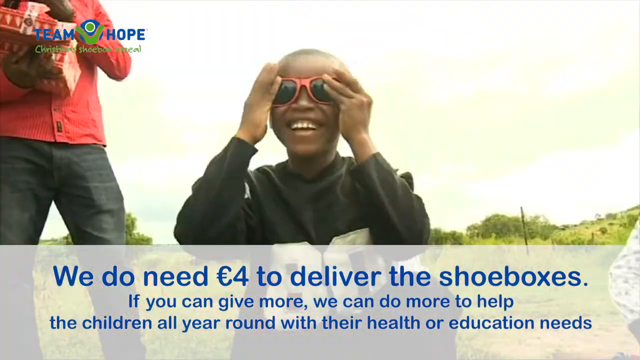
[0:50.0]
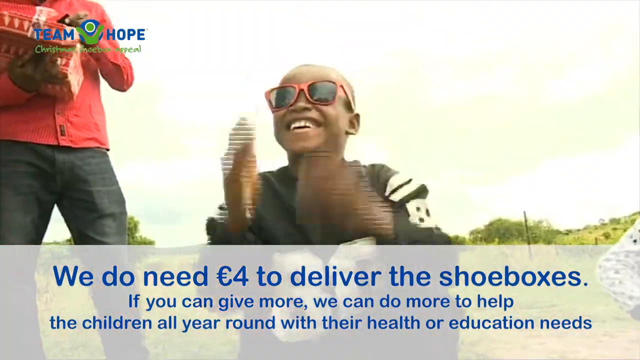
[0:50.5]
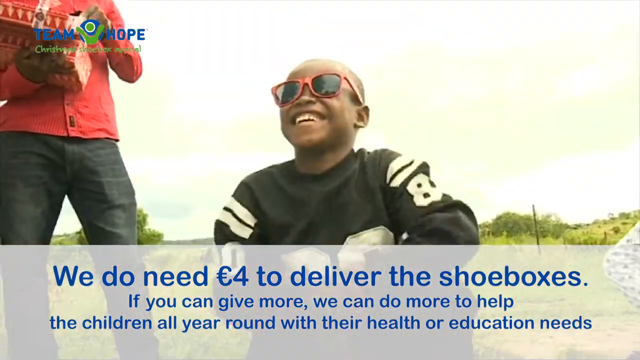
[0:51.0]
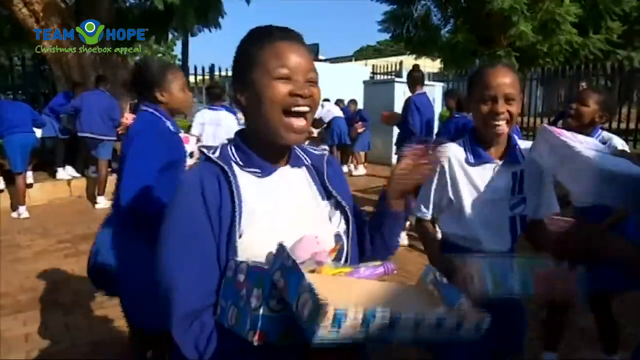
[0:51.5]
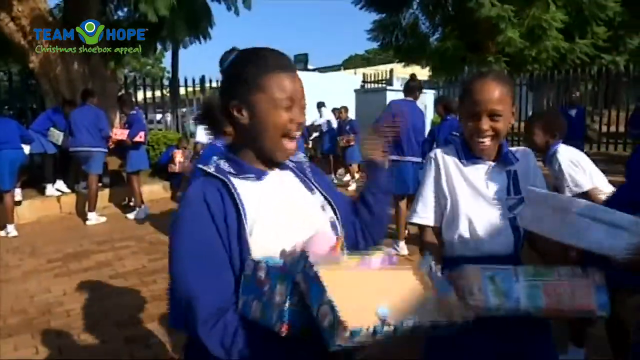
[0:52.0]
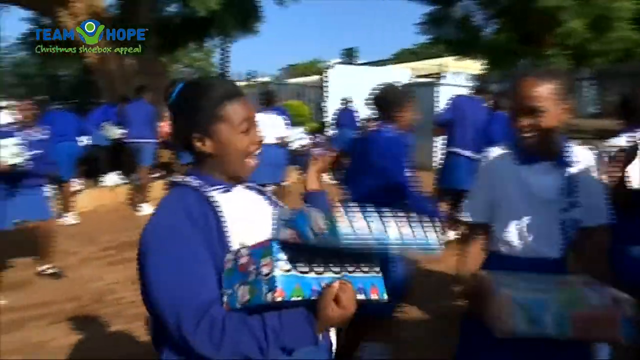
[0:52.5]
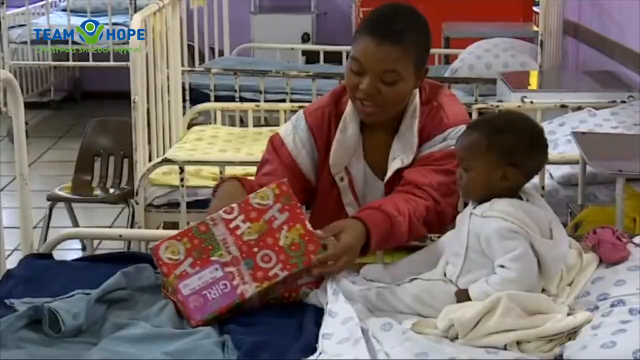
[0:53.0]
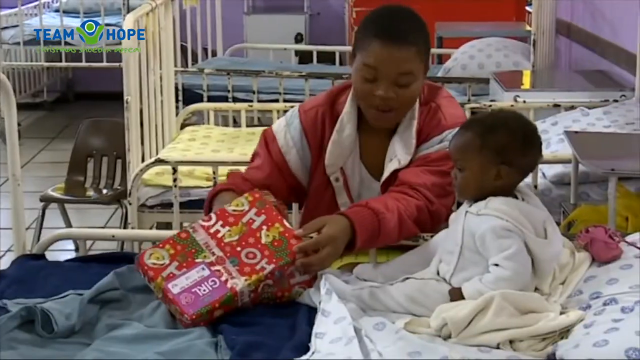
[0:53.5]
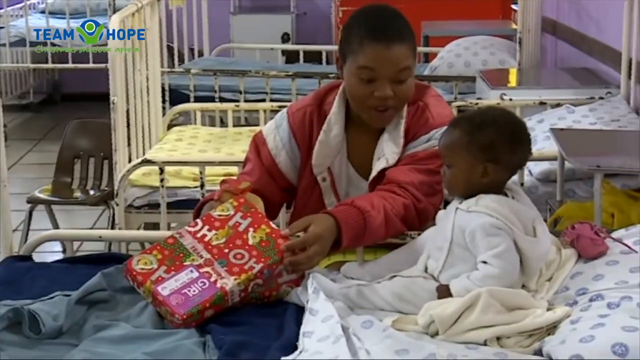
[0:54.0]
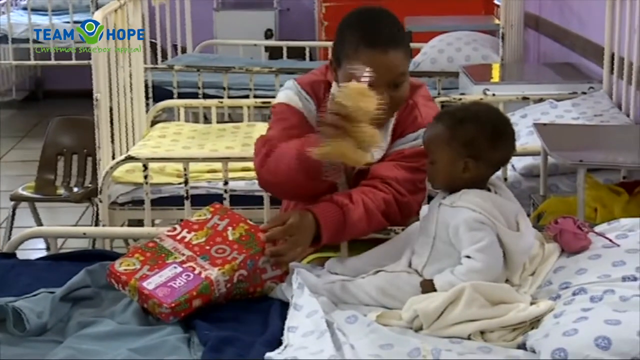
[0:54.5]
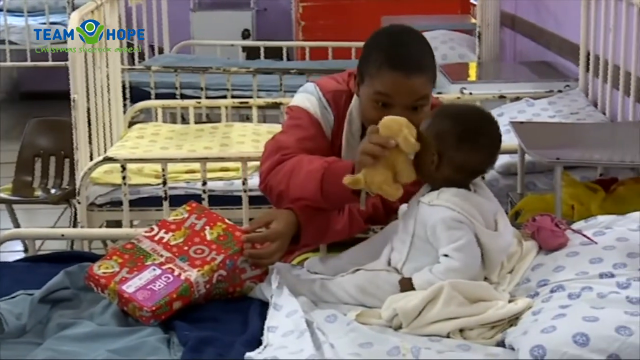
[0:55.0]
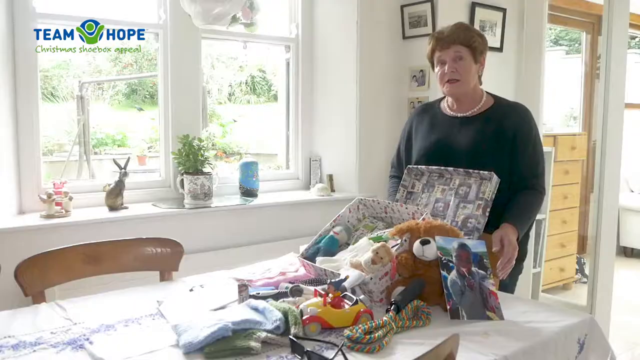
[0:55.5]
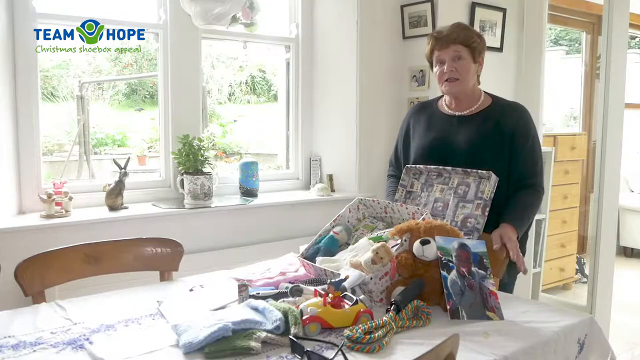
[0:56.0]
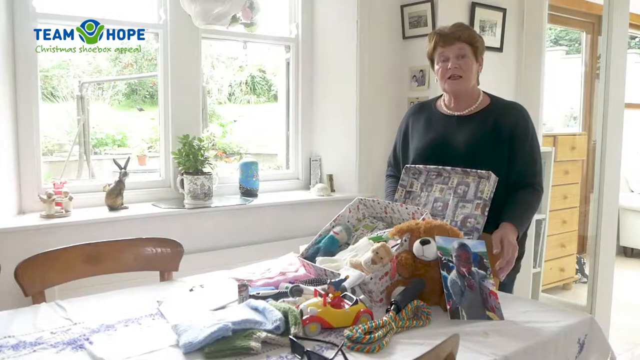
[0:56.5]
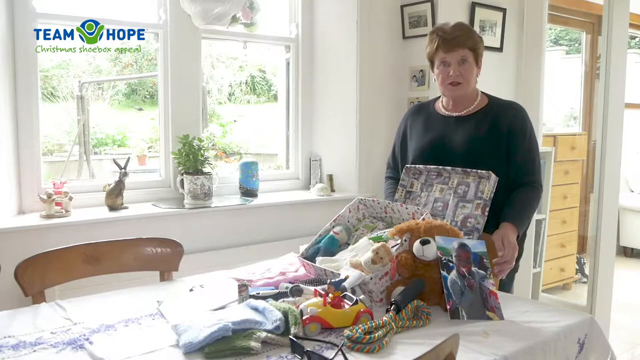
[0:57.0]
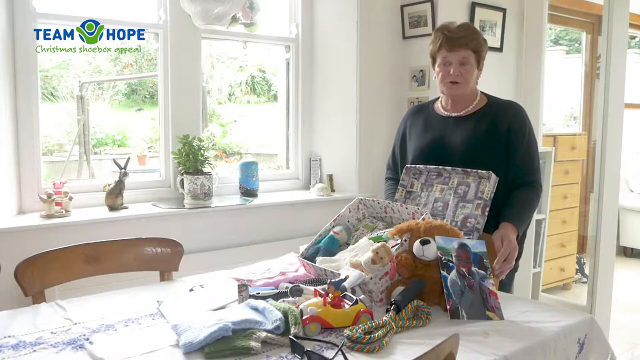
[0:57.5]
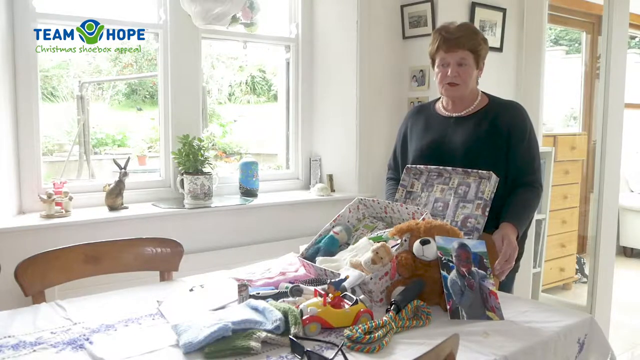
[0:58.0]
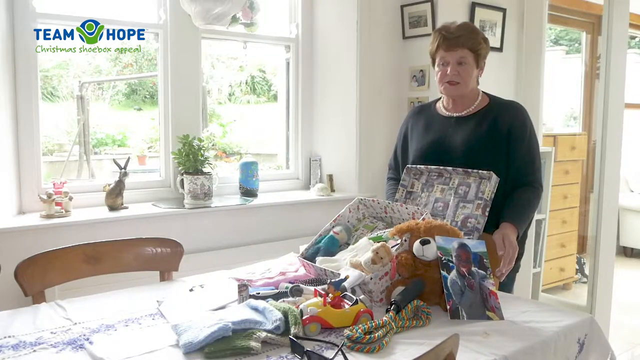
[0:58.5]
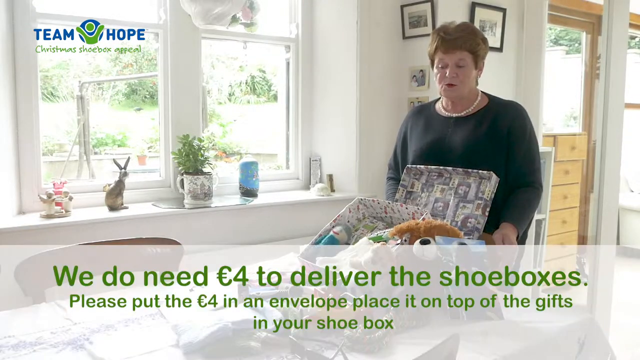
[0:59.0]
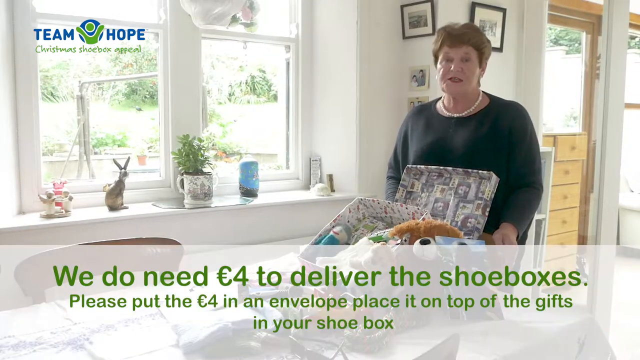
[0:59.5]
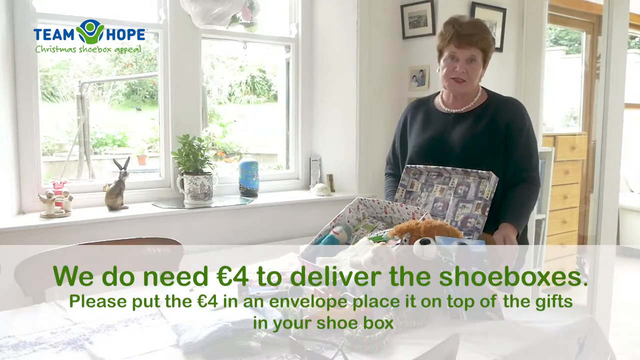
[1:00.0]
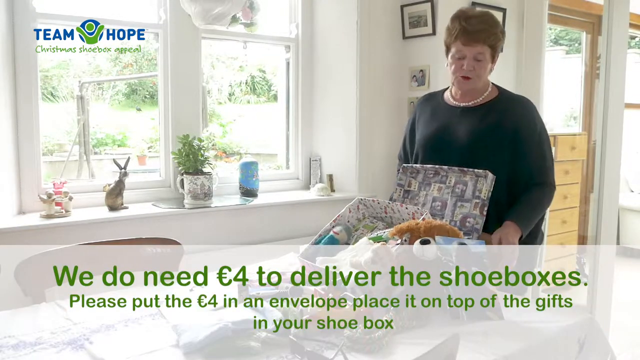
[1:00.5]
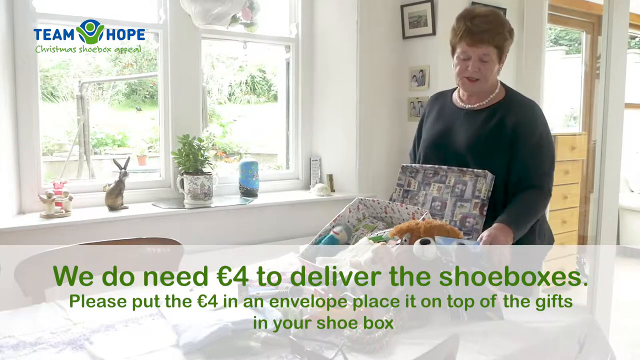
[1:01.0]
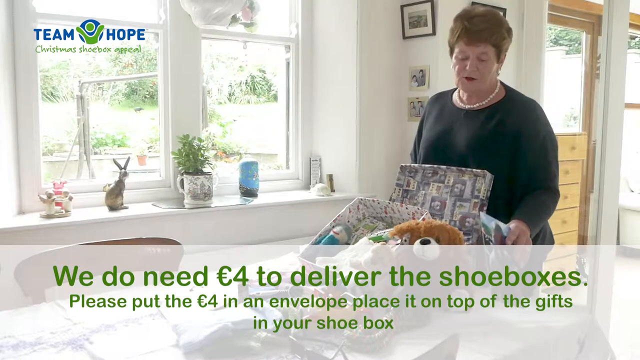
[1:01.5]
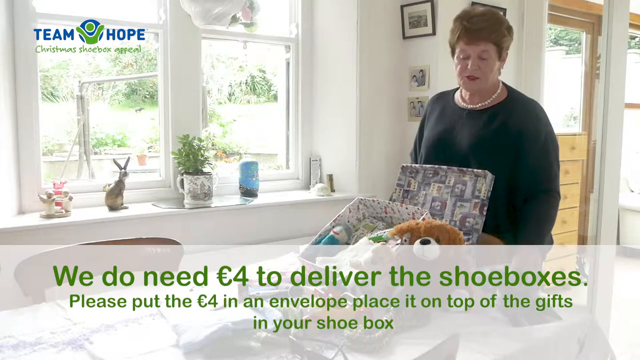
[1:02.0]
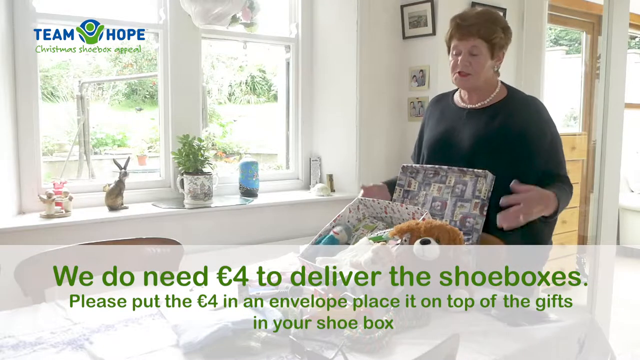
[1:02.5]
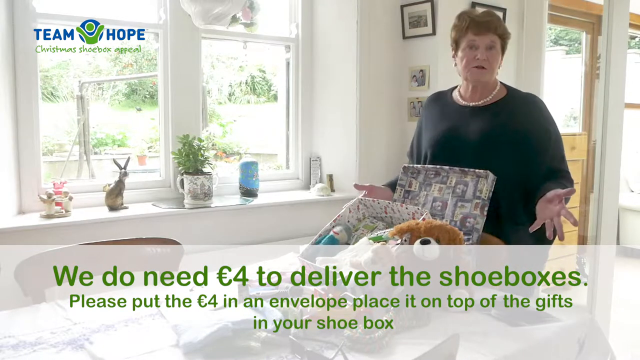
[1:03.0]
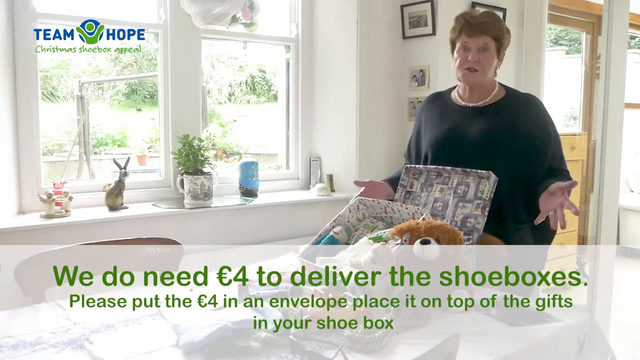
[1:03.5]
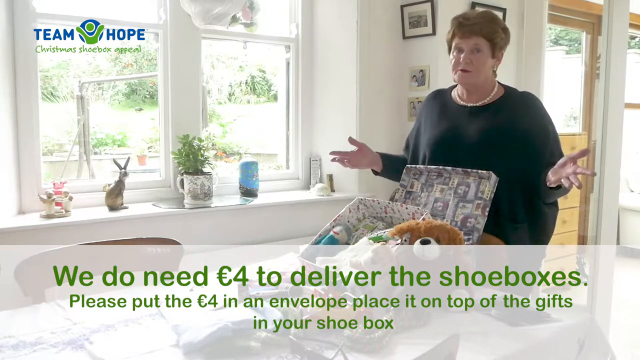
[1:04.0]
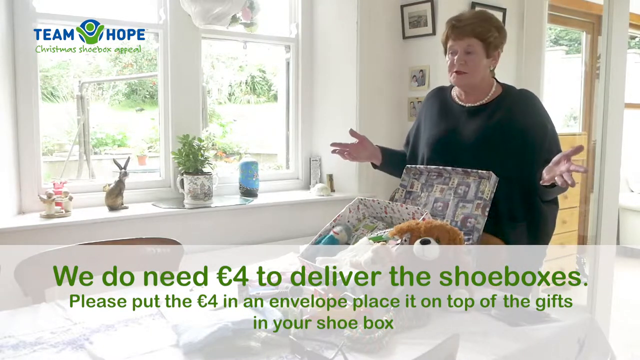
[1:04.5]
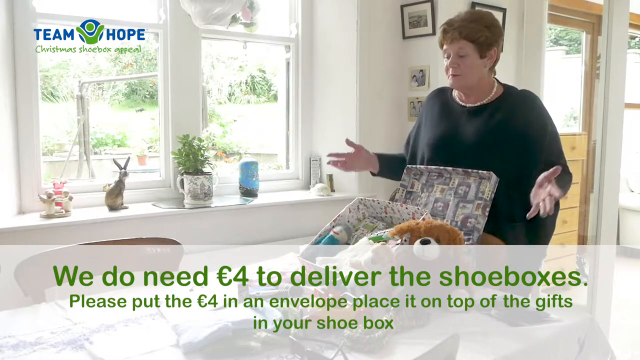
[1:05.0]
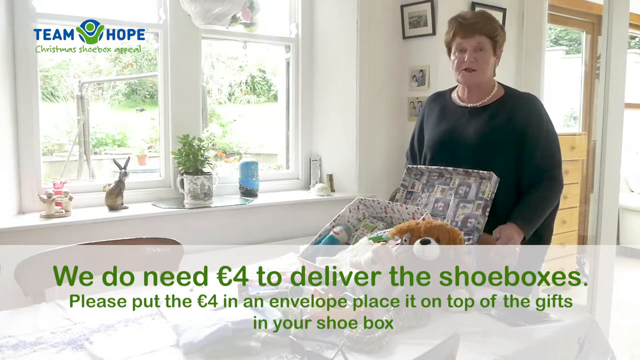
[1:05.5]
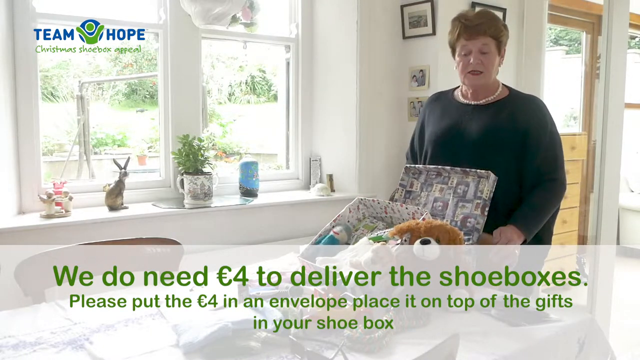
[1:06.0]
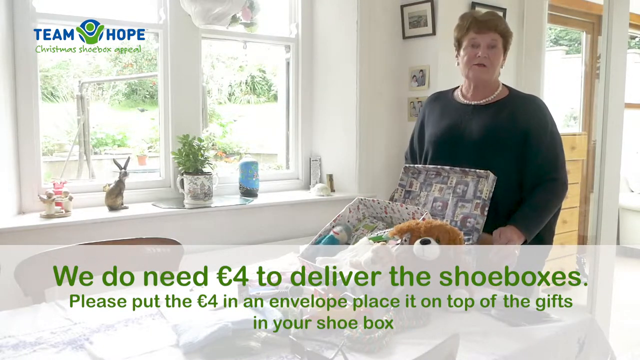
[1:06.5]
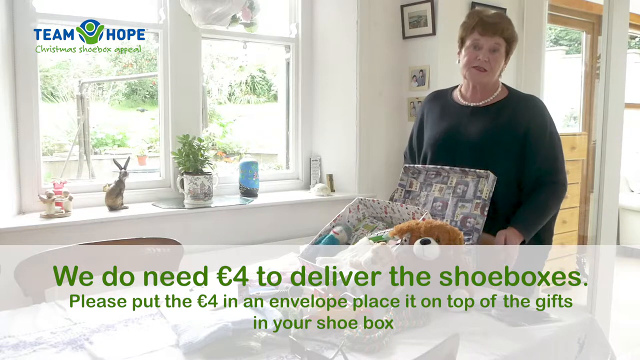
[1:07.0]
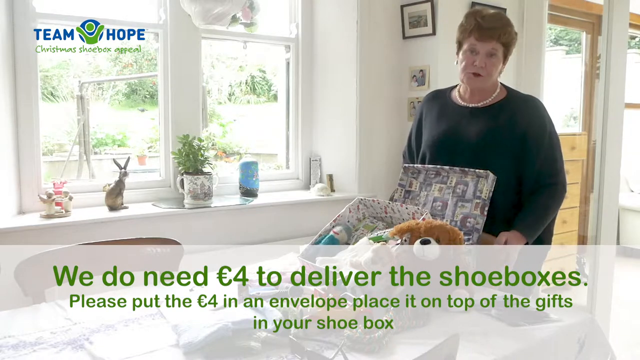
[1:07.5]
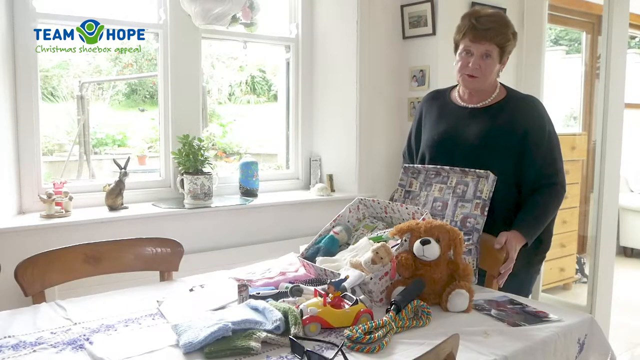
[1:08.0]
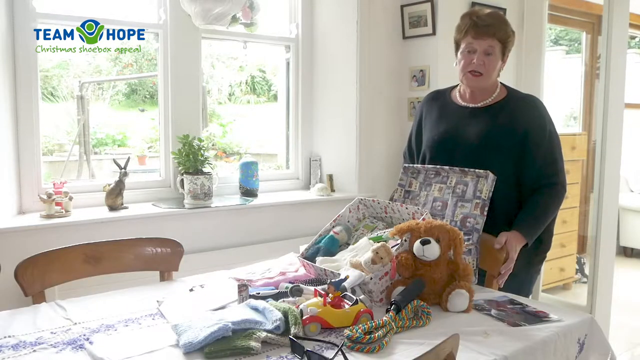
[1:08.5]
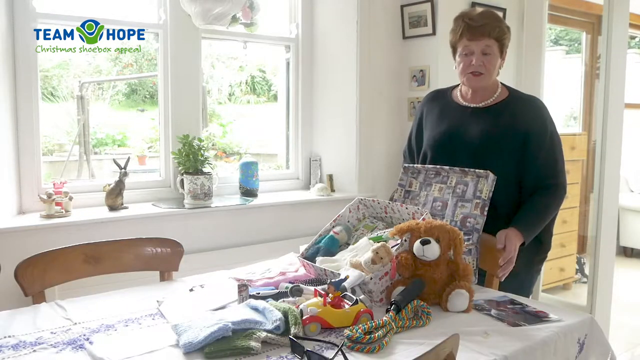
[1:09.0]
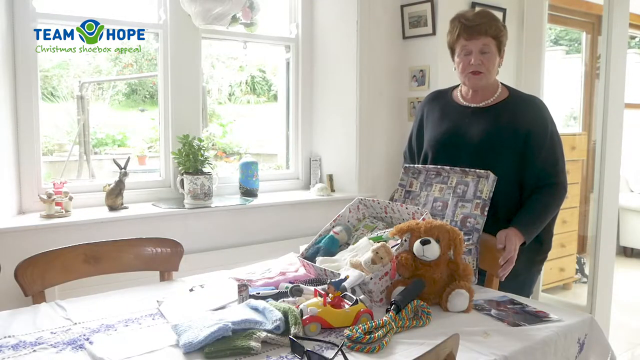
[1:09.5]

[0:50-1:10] The banner at the bottom reads "we do need four British pounds to deliver the shoeboxes. If you can give more, we can do more to help the children all year round with their health and education needs." In the background, a group of schoolgirls, apparently at a private school and all in uniforms, smile, laugh, and open their boxes. The scene changes to a mother in a hospital with a baby, opening the box and showing the child the toy. Another banner appears at the bottom reading "we do need four dollars to deliver the shoeboxes. Please put the four dollars in an envelope and place it on top of the gifts in your shoebox." The woman continues talking to the camera.